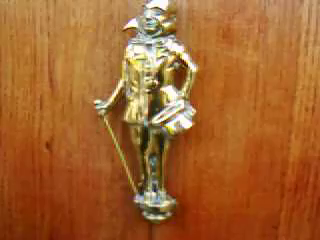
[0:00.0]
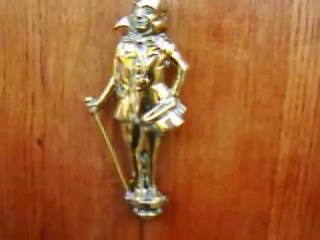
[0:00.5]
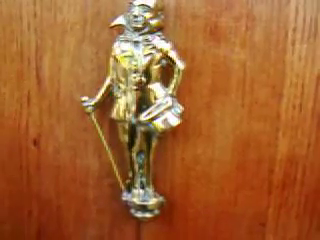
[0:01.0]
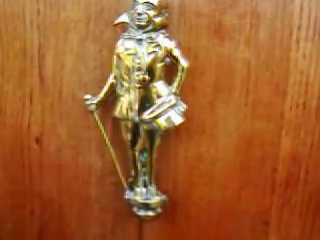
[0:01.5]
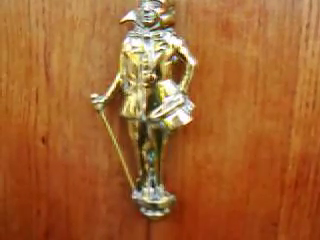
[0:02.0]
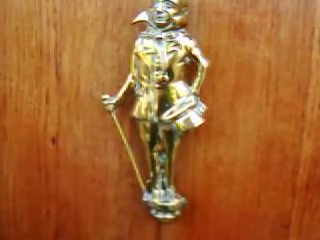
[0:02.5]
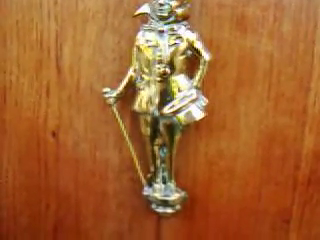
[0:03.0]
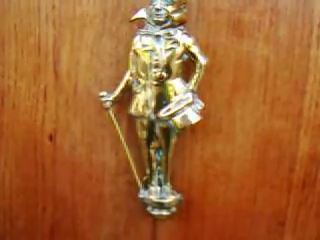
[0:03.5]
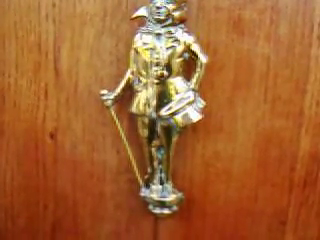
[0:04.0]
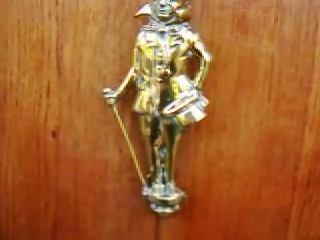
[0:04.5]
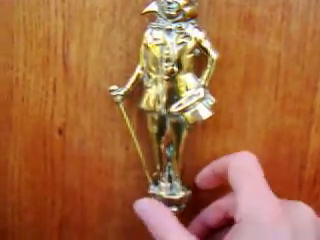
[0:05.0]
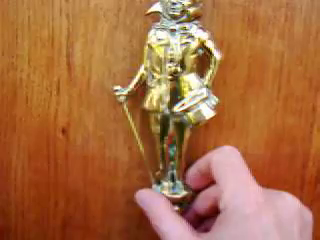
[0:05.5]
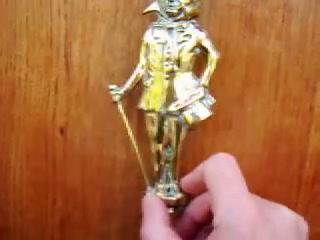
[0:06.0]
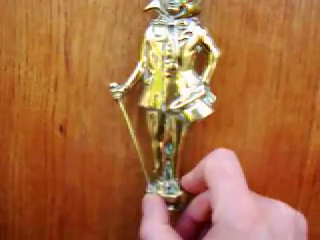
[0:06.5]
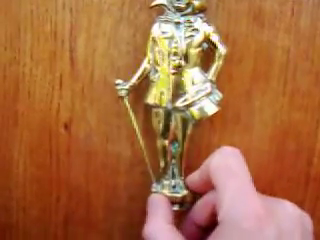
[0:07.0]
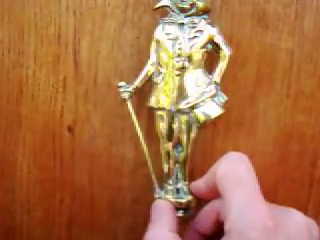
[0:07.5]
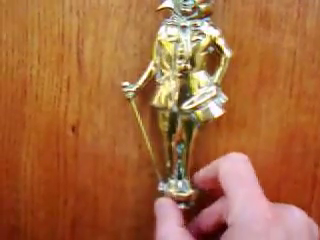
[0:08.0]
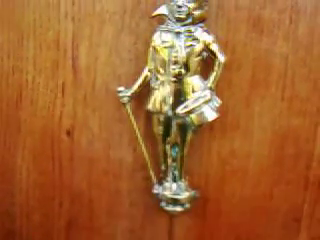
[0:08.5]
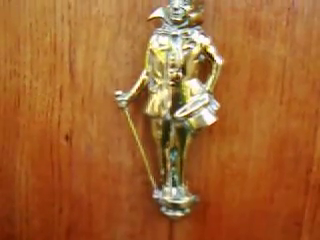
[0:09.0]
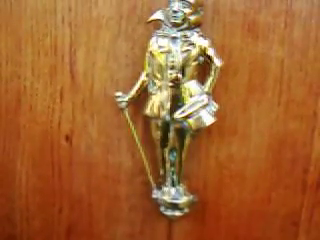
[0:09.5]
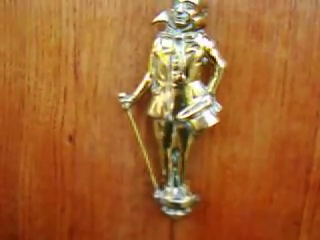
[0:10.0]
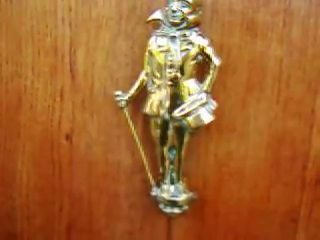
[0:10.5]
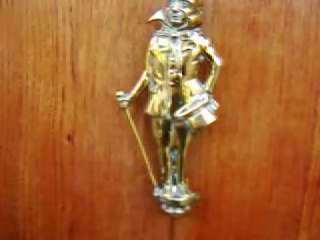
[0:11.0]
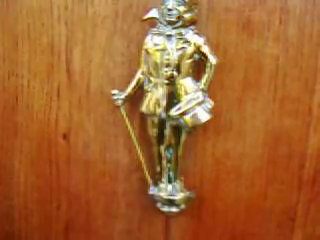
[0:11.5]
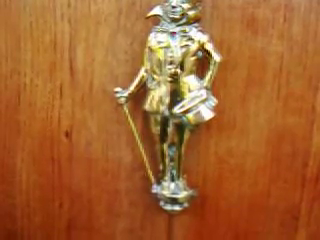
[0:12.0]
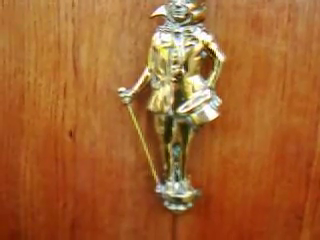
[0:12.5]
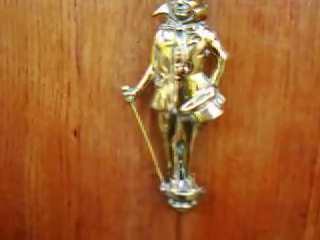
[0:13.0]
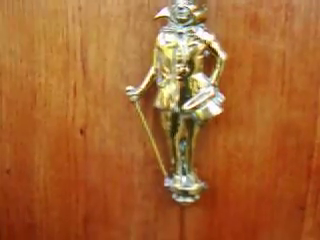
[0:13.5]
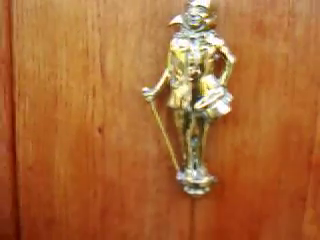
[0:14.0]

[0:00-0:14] The video starts with a golden statue that appears to be of a man standing and holding a cane in his right hand. His face is visible, and he is sort of facing the camera. The statue is possibly a knocker: a hand reaches out, grabs the bottom of it with the index finger and thumb, pulls it back and forth, and knocks on the door. The door it is set on is brown. The man appears to be wearing some sort of coat with very large collars that stick up around his face. He looks like he is maybe British, and his pose makes him look very British. He has his left hand on his waist, maybe holding something.